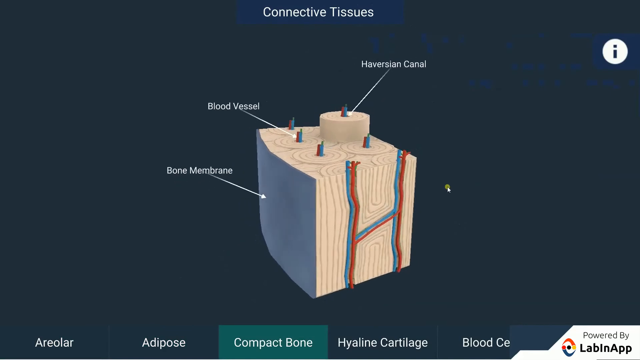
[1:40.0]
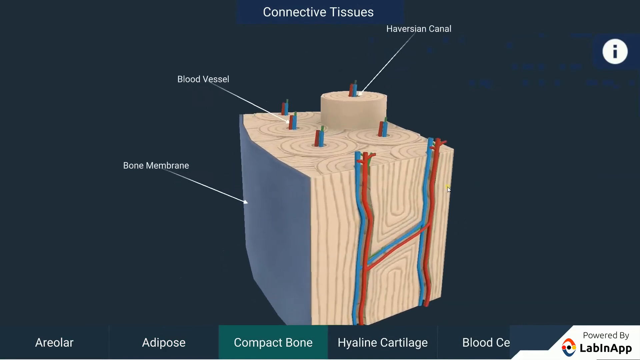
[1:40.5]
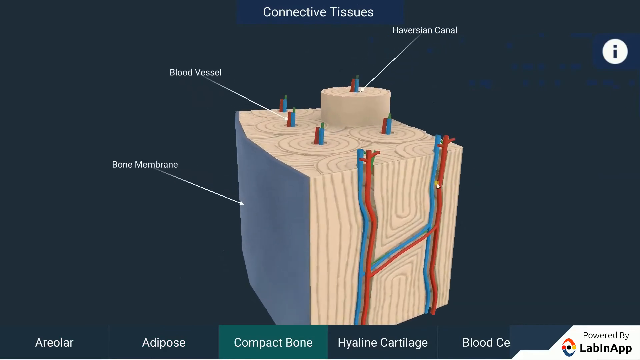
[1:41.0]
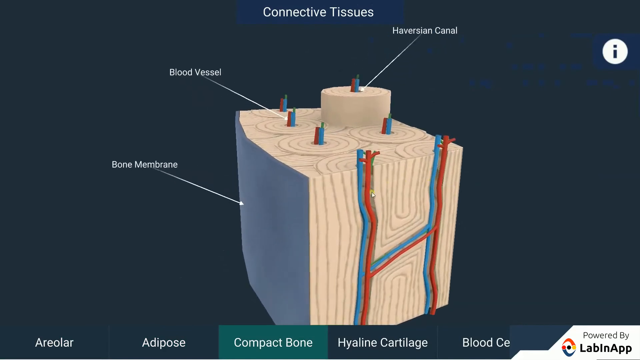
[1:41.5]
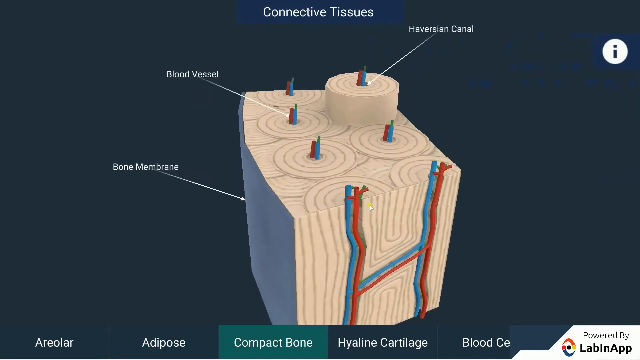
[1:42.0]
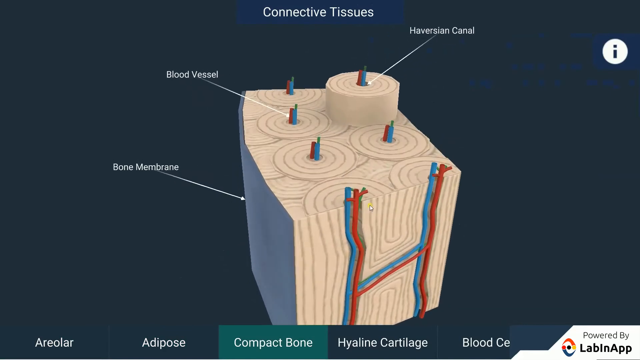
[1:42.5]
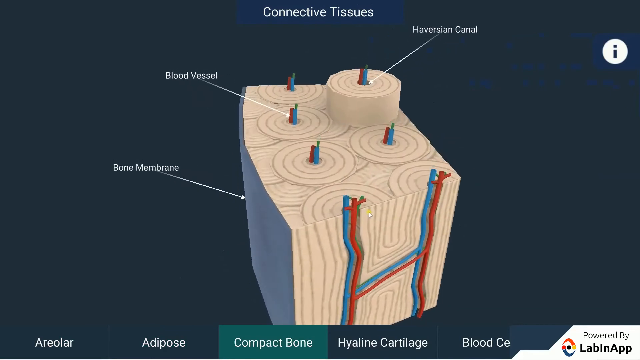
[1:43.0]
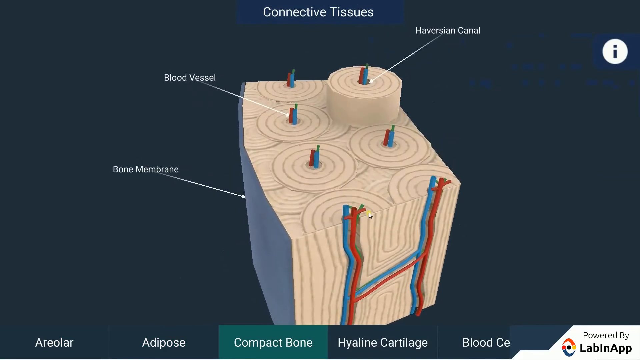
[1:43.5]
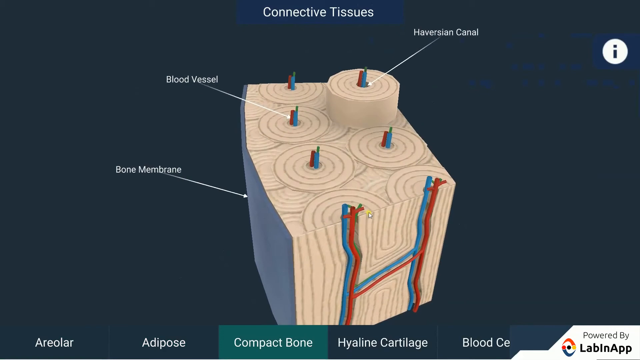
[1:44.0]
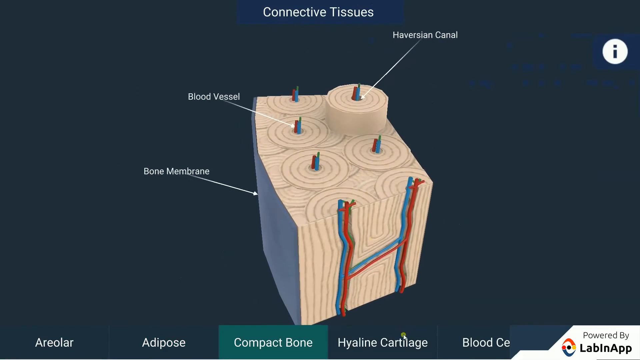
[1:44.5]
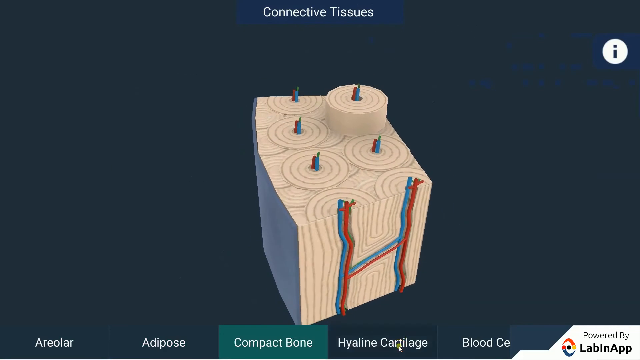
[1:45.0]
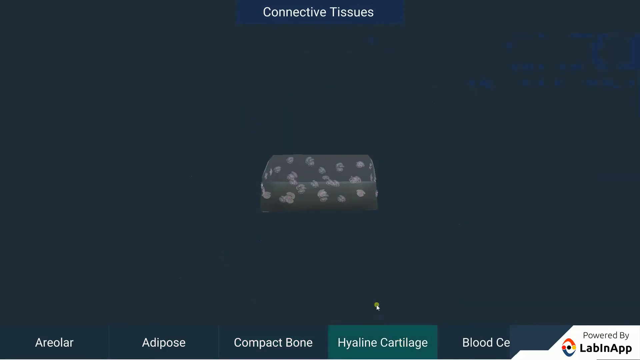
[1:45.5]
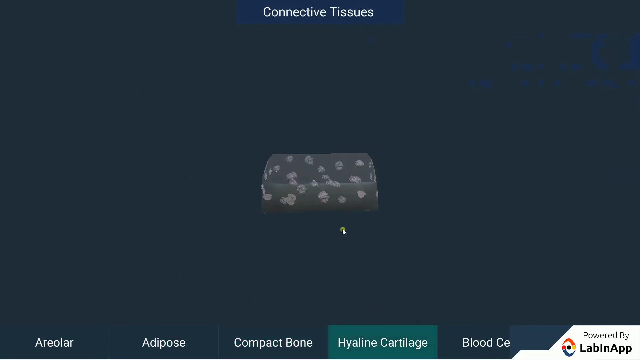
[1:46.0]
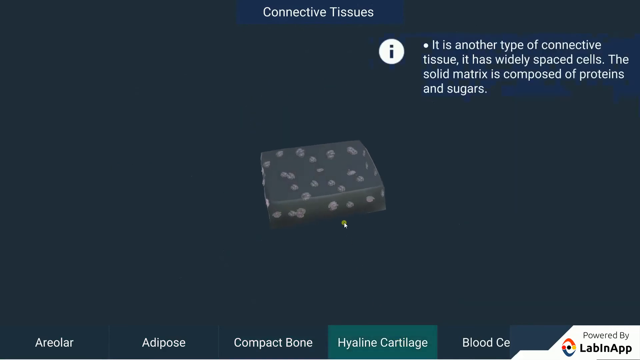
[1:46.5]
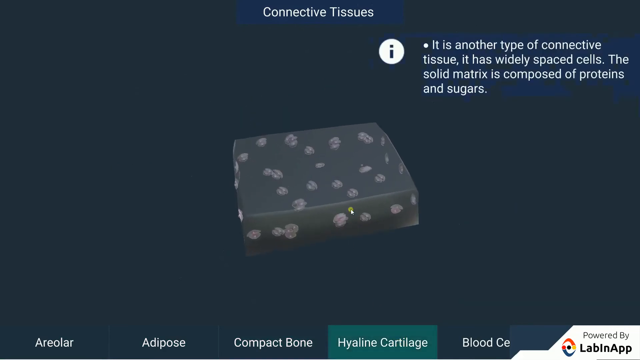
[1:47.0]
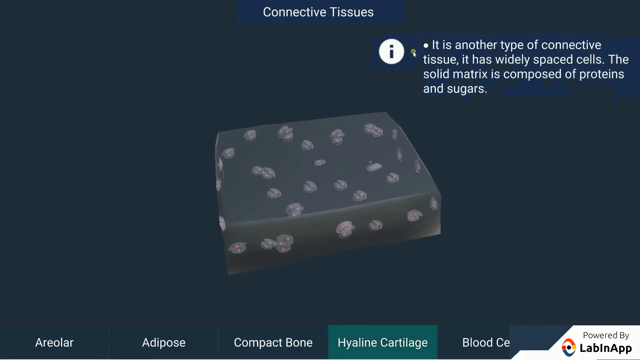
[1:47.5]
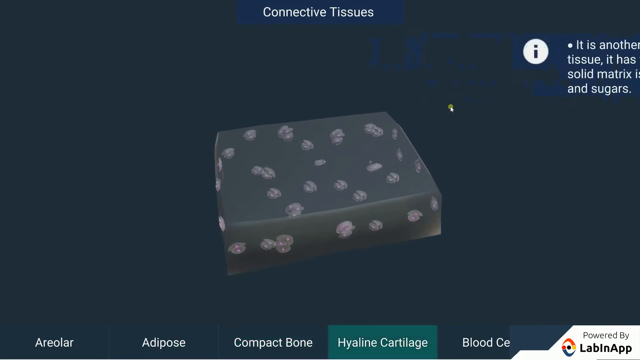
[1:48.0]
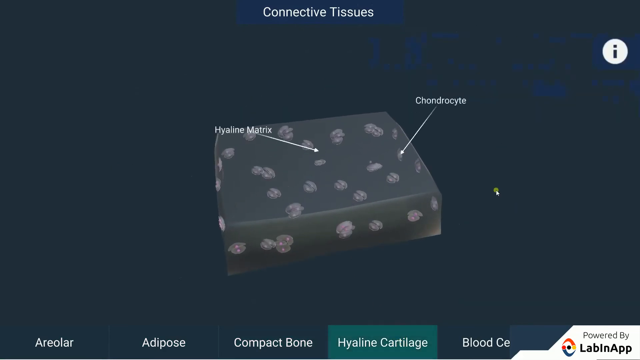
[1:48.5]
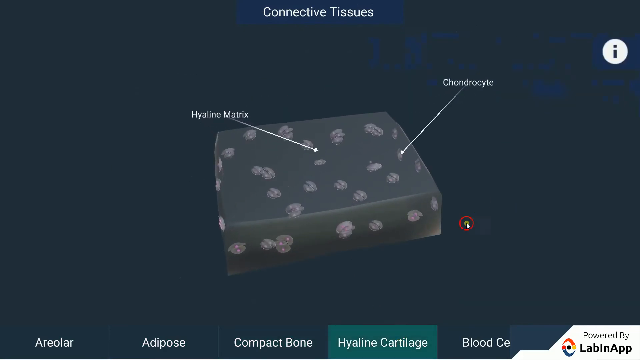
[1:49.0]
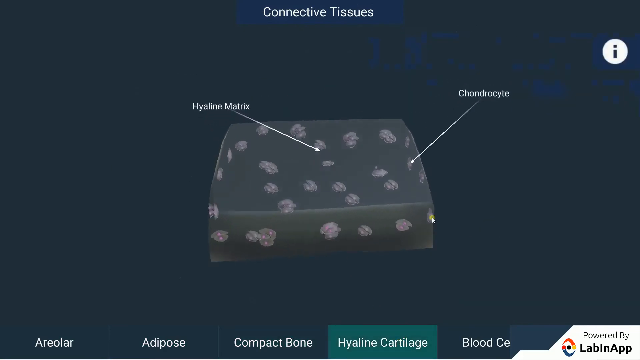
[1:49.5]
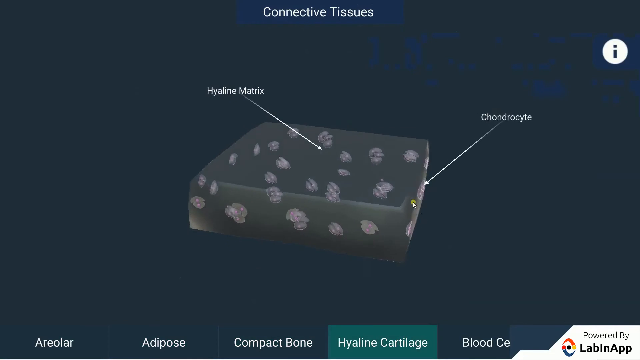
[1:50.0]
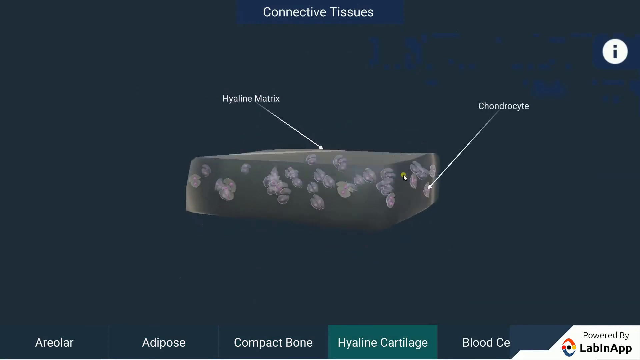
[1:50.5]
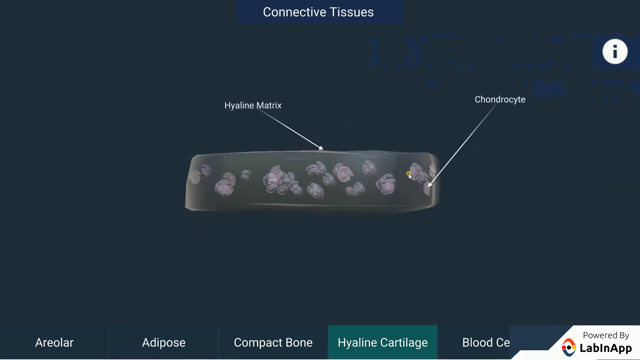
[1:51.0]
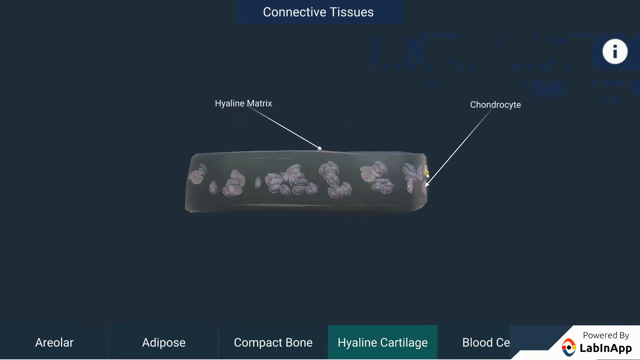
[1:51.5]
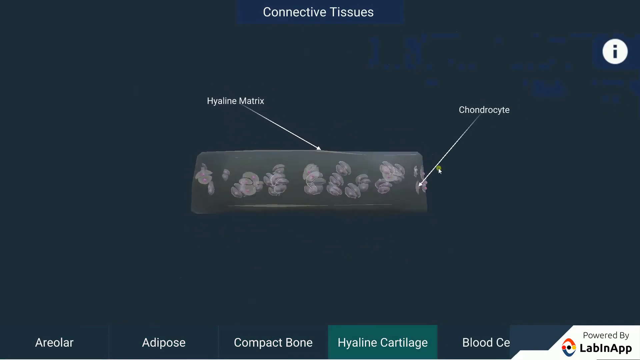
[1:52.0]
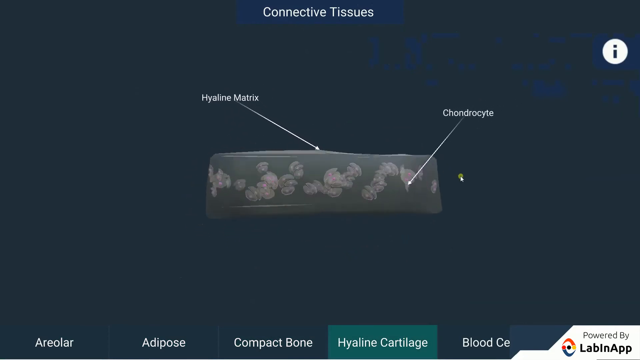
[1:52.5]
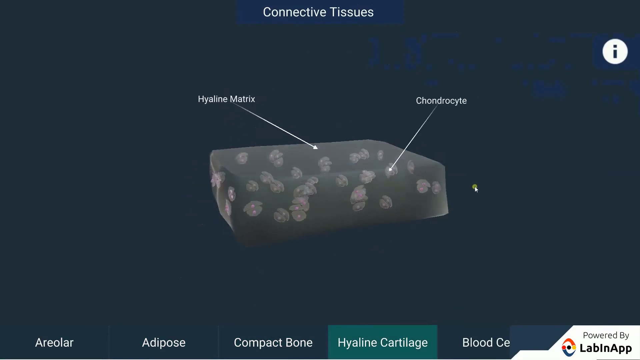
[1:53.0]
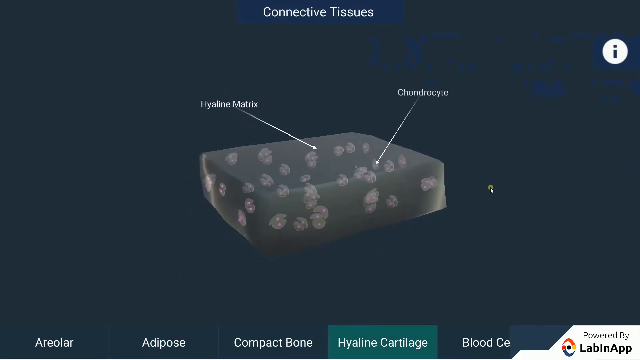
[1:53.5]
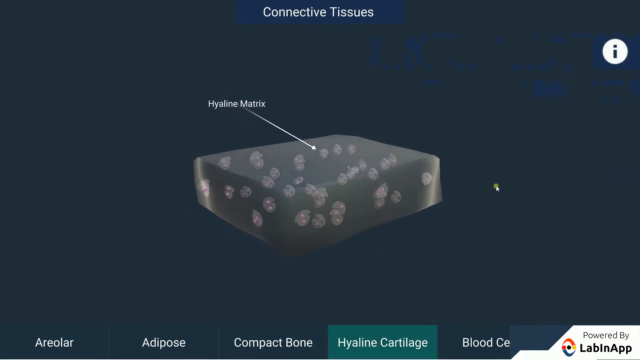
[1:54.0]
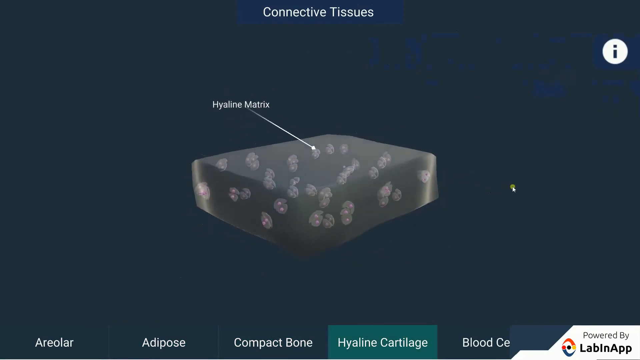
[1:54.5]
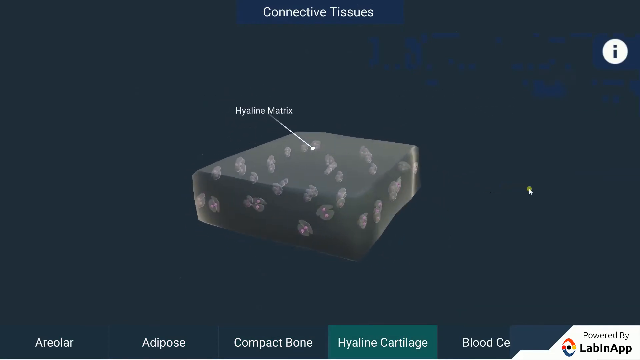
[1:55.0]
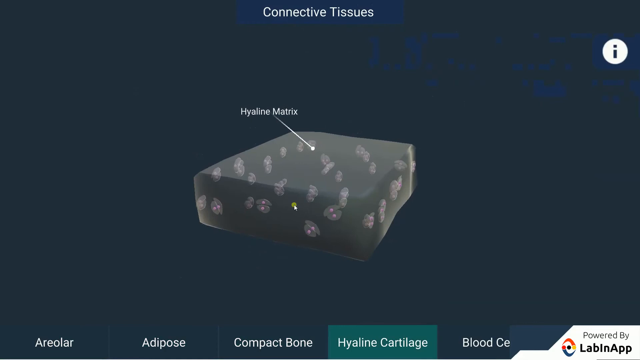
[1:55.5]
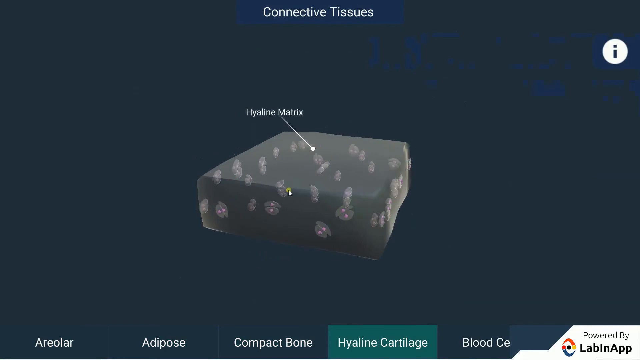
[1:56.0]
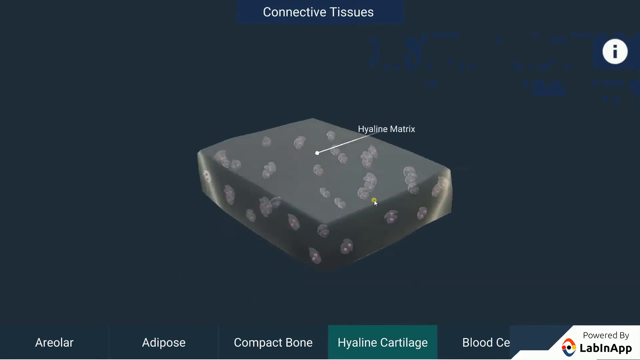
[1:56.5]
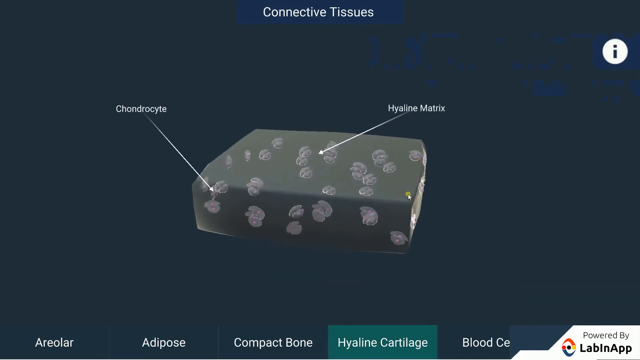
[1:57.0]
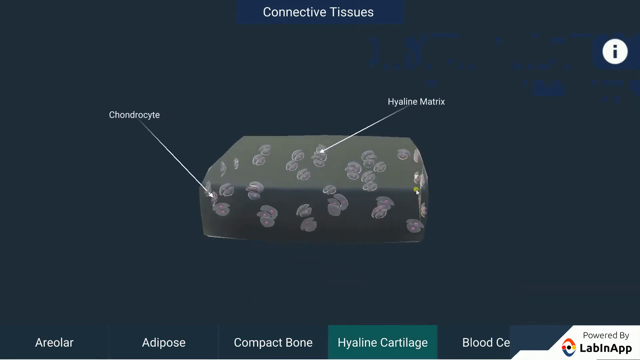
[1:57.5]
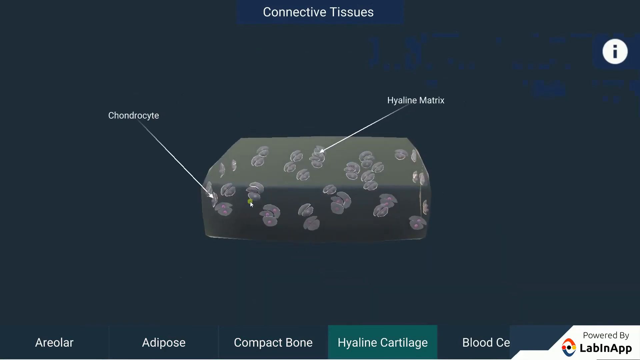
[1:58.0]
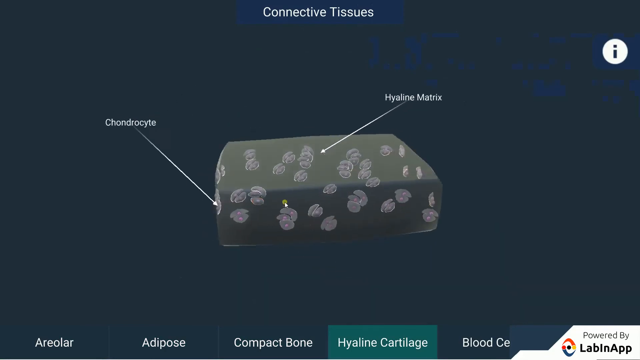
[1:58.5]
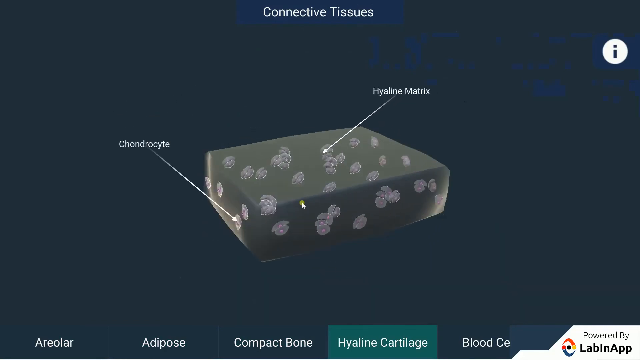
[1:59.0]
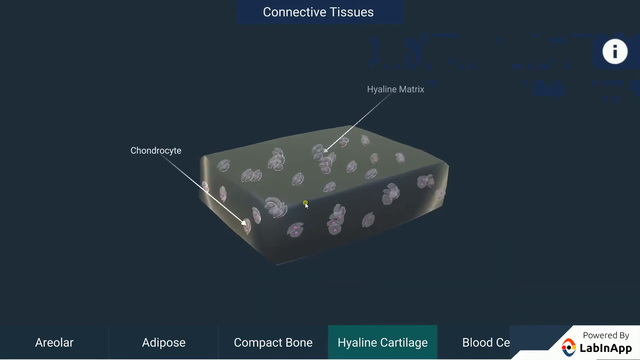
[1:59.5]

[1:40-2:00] The rendering of the piece of bone continues to be explored as the camera approaches it to show its details in more depth. Marks of many circles and curves are visible on it. Blood vessels and veins cross it, forming what appears to be the letter H, and these veins and capillaries pass through cylindrical bodies that make up the bone. The labels around it then disappear as the user moves the cursor to the menu below and clicks the next option, "Hyaline Cartilage." A rendering appears of what is probably another connective organ, which looks gray and dark, and text at the top right says "It is another type of connective tissue. It has widely spaced cells. The solid matrix is composed of proteins and sugars."